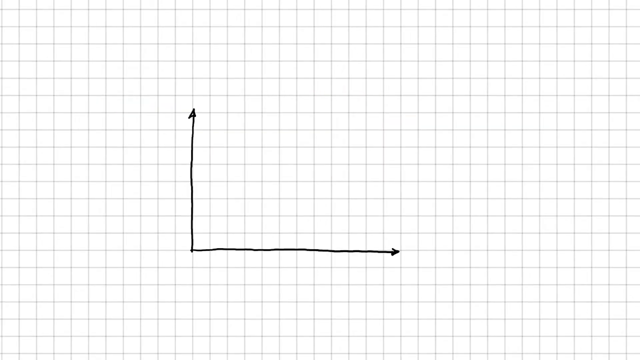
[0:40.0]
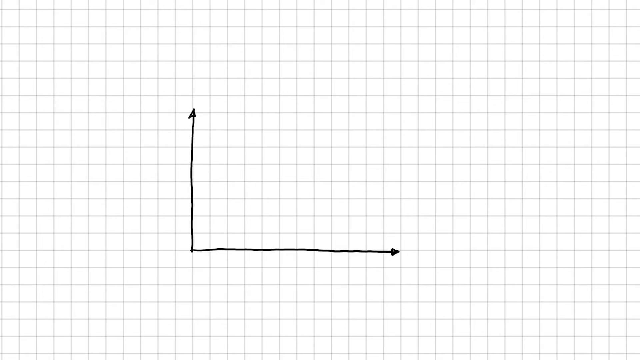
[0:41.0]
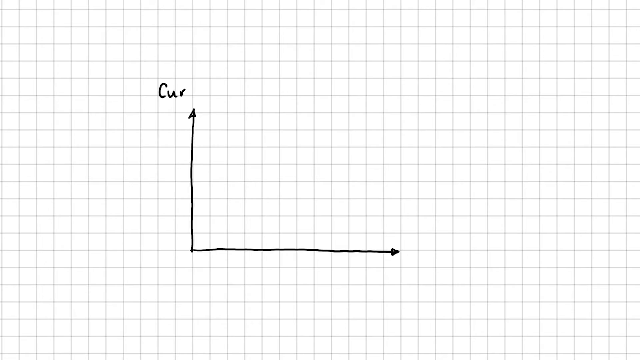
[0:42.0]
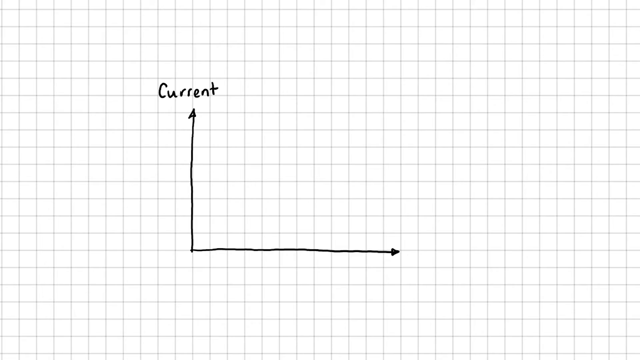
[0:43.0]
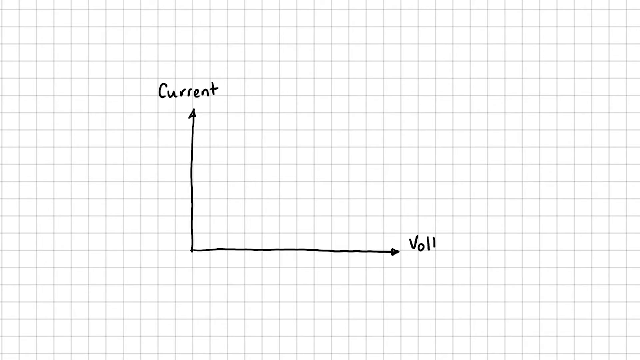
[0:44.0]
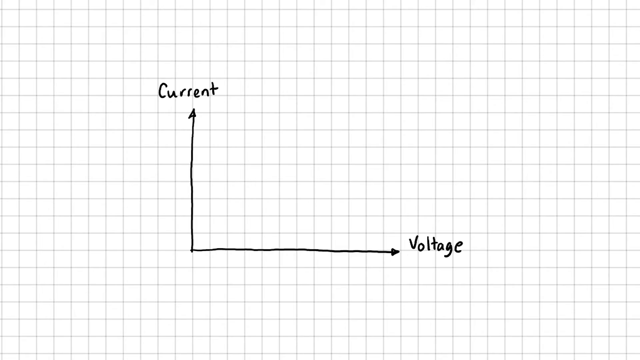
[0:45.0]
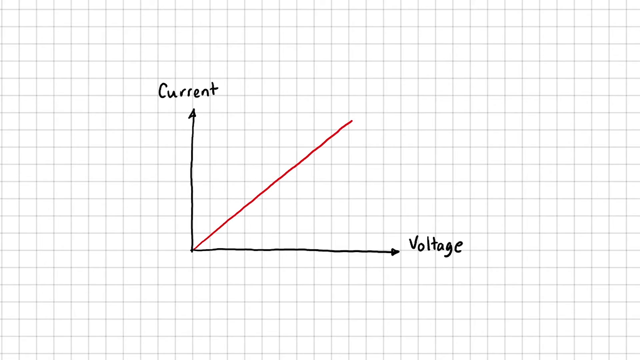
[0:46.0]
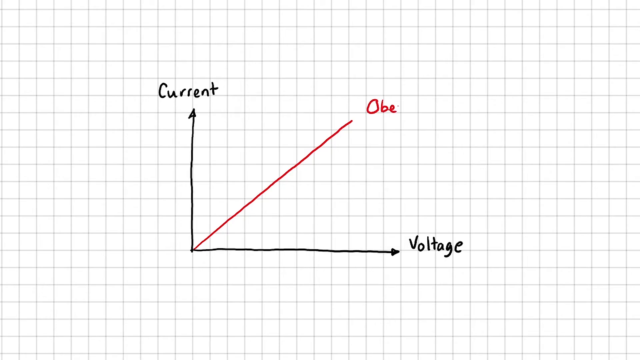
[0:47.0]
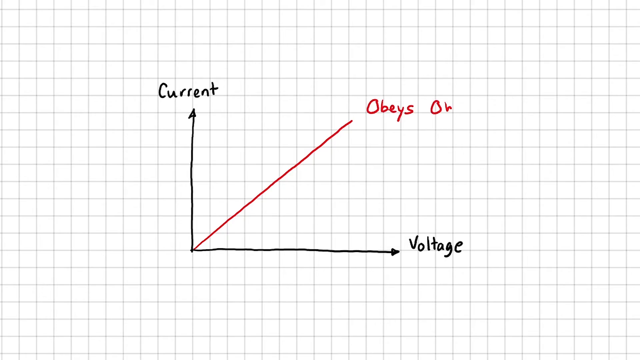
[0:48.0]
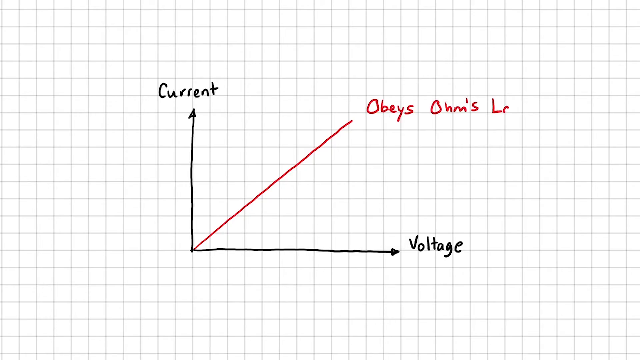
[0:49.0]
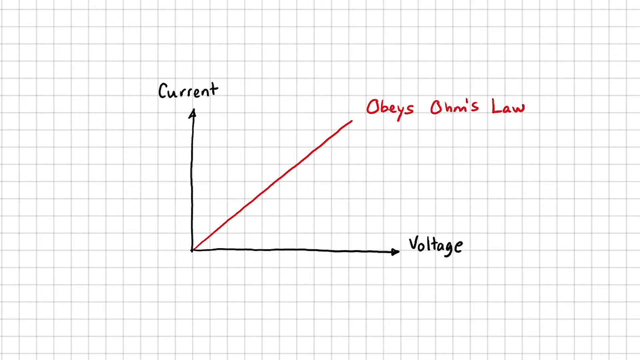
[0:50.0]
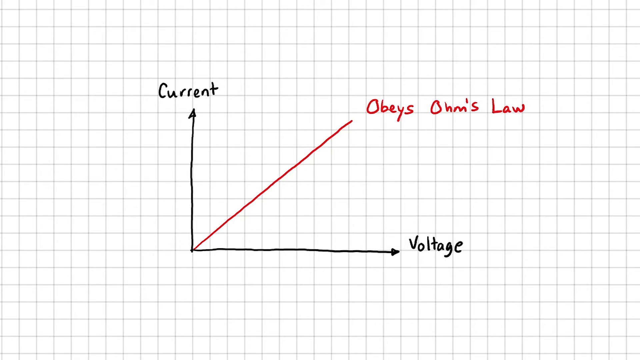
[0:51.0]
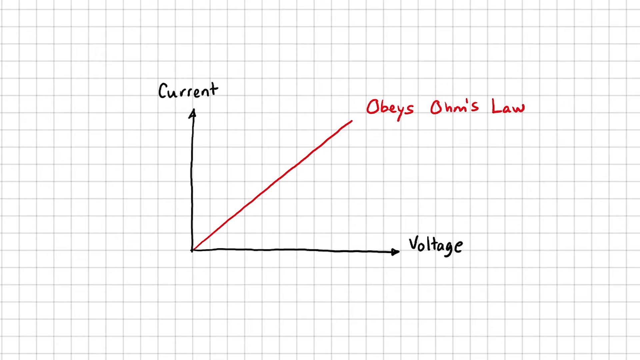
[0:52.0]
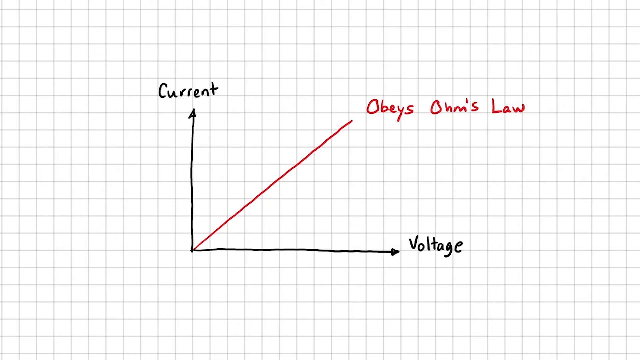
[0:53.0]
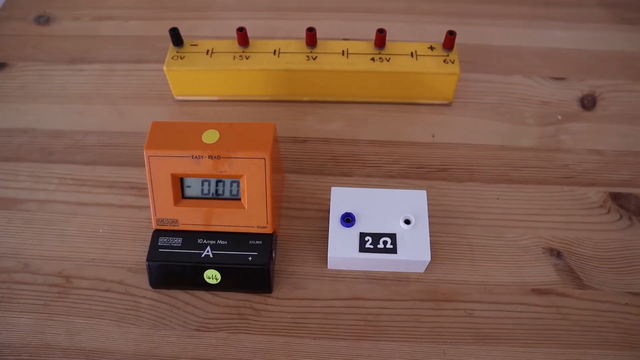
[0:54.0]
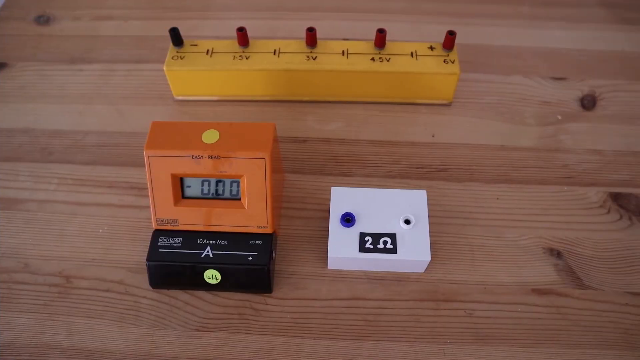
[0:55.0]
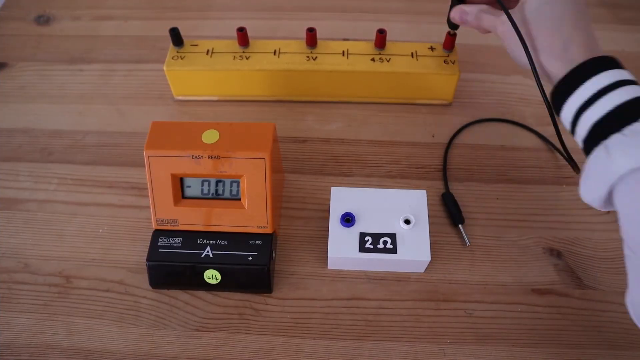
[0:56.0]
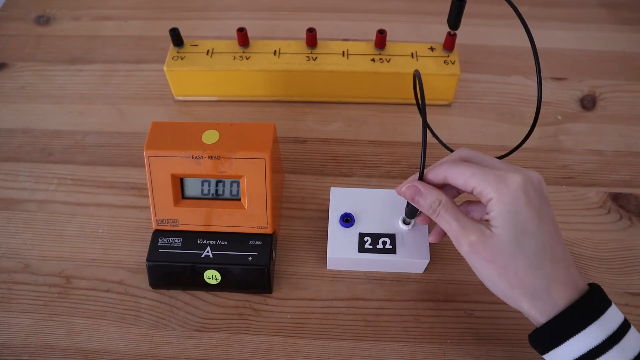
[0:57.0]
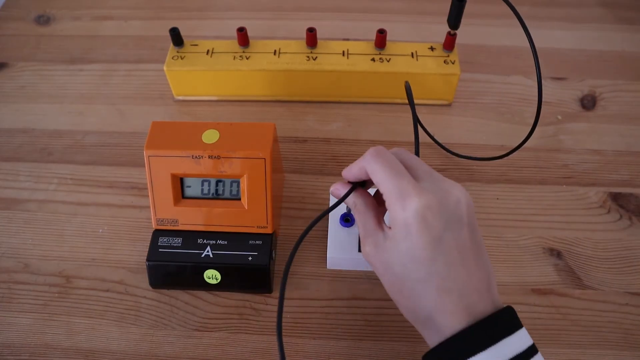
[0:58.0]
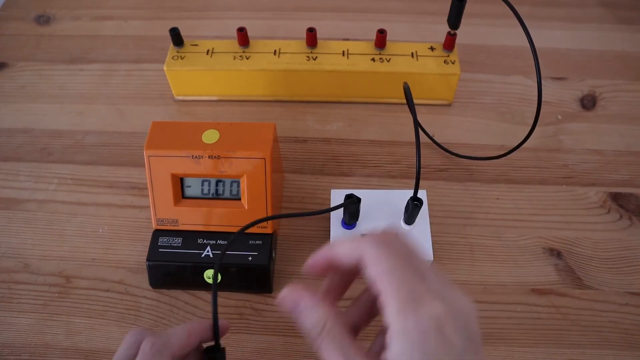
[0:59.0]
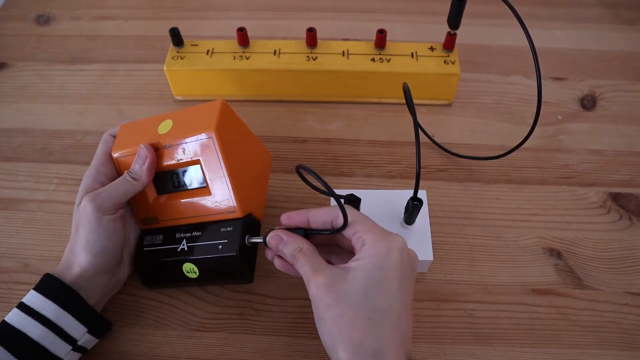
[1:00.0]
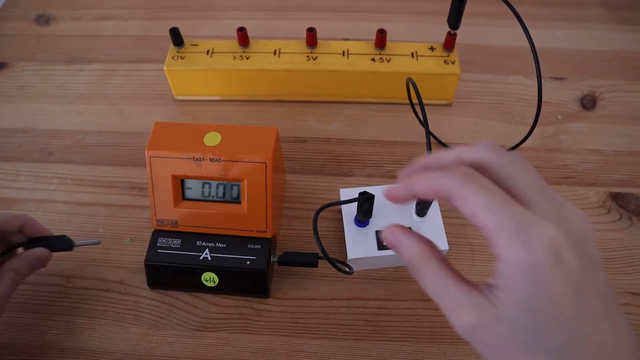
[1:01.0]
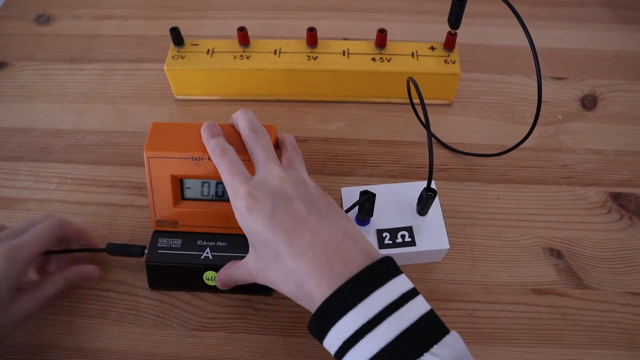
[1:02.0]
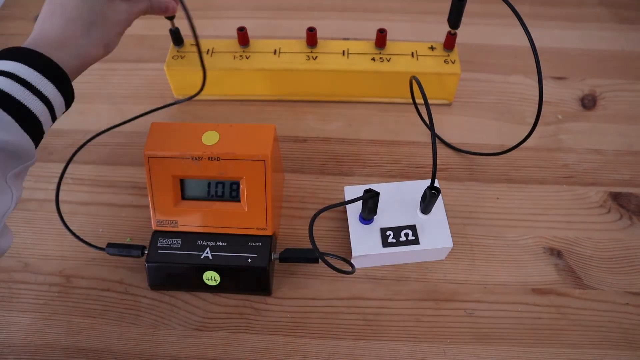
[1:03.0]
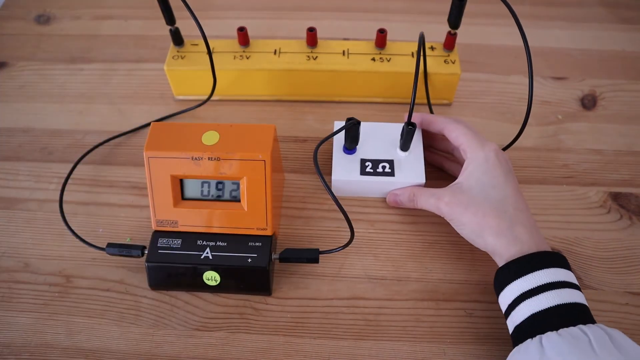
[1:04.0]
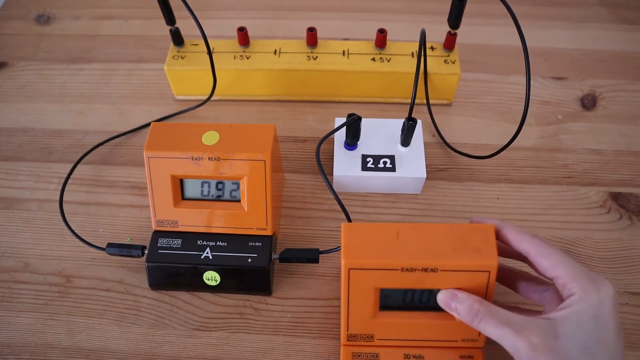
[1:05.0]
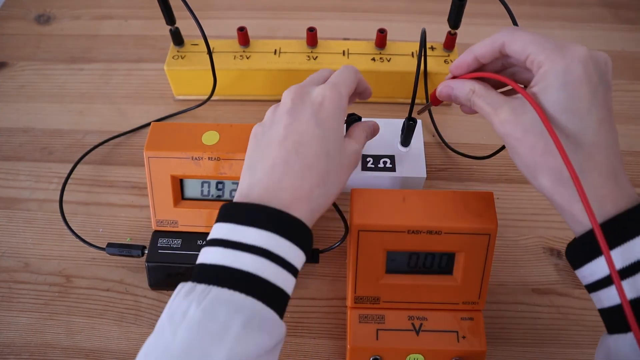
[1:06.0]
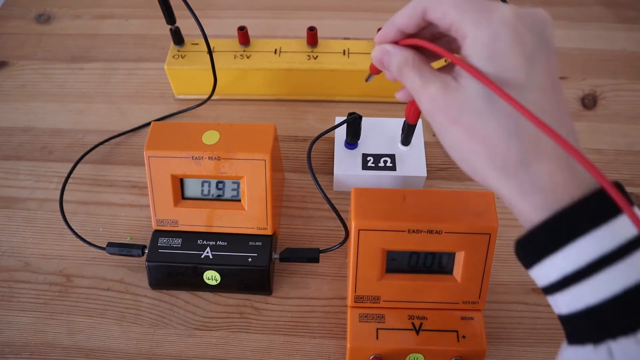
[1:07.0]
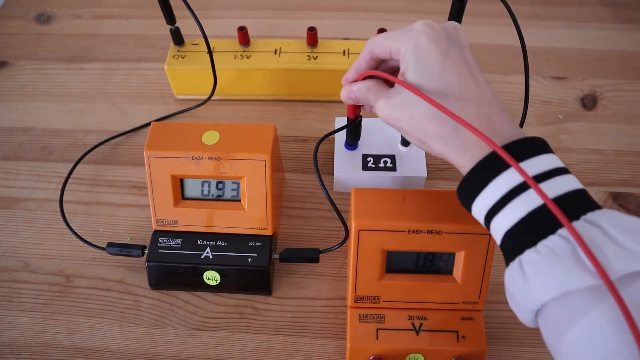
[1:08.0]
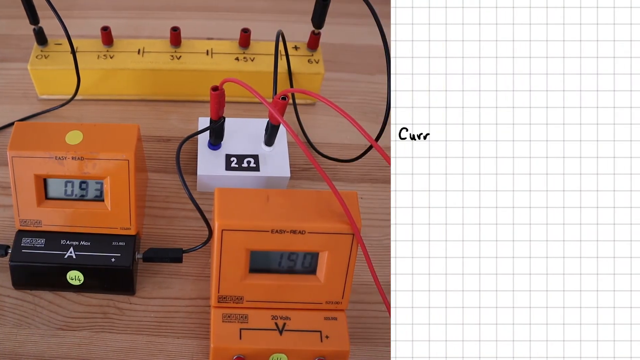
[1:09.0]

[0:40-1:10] The graph's upward axis shows current and its bottom axis shows voltage. A red diagonal line runs upward to the right from the point where the axes meet, showing that it obeys OHM's law. The view slides across to the items seen earlier: the orange box with the black plug-in, the white box with a couple of holes, and the yellow device with its different plug-ins and labeled voltages. One black cable is plugged into the five- or six-volt plug-in and then into the white box. Another is plugged into the white box and then into the black plug-in on the orange box. A further black wire is plugged into the black plug-in and then into the other end of the yellow bar, creating a circuit. The orange box shows a readout of 0.92. Another orange box is brought in, and a red cable is plugged into the black cables on the white box and then into the other orange box.